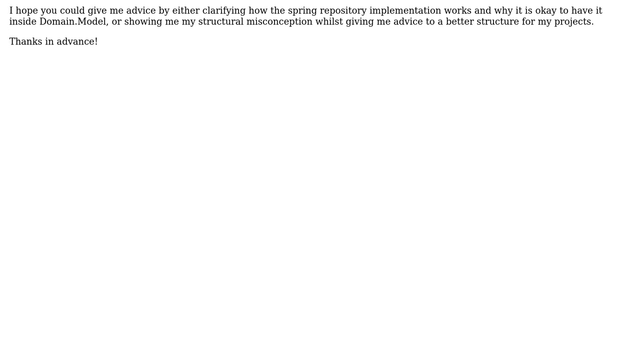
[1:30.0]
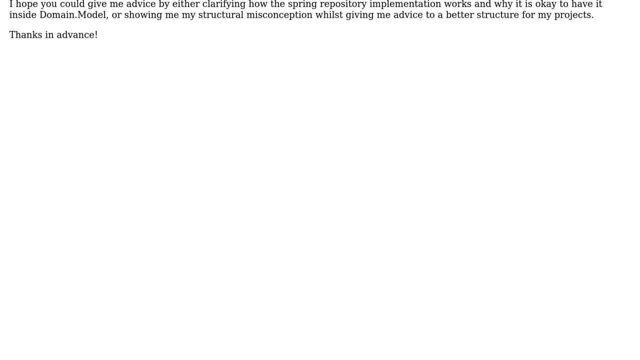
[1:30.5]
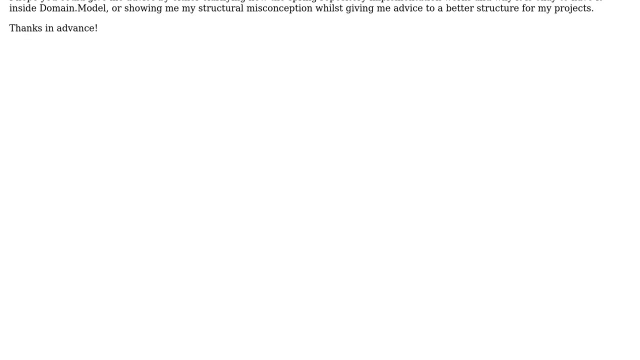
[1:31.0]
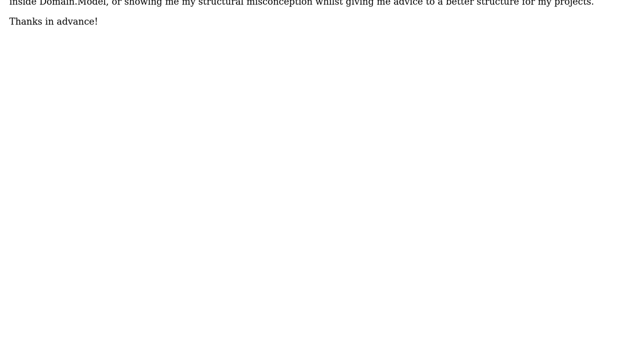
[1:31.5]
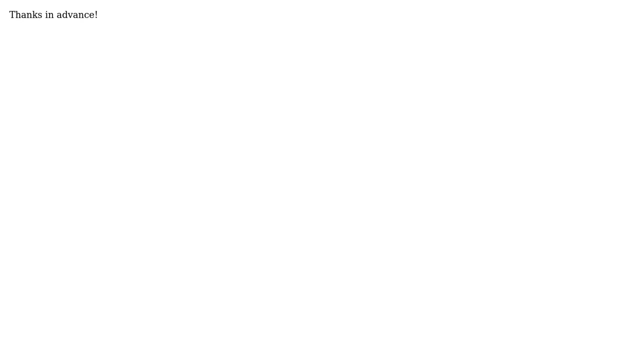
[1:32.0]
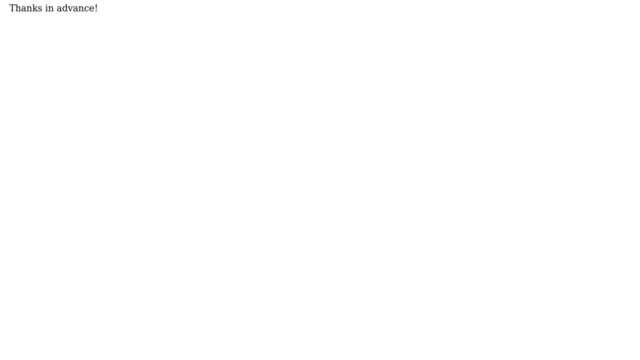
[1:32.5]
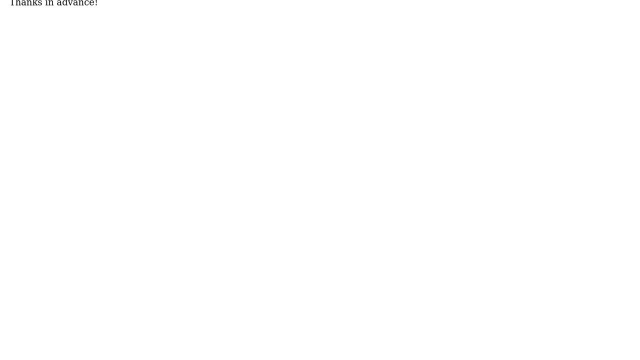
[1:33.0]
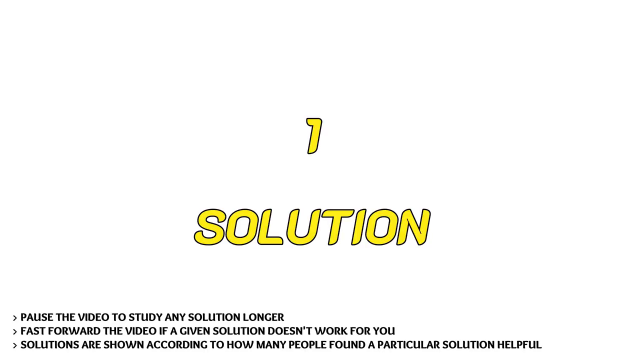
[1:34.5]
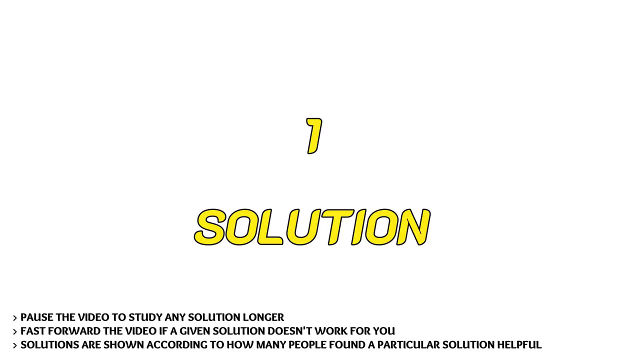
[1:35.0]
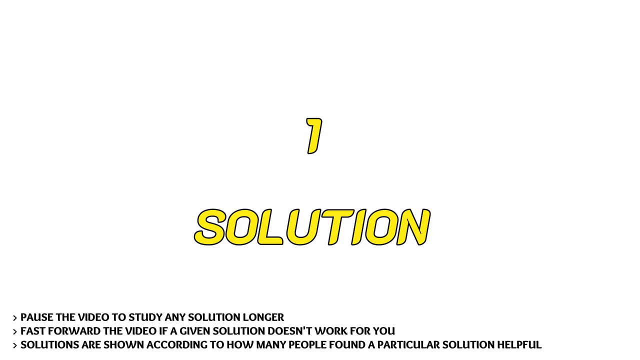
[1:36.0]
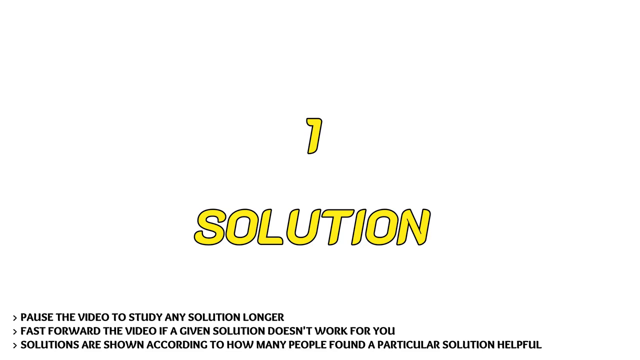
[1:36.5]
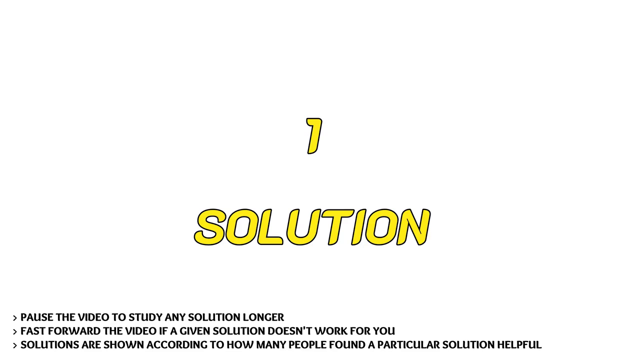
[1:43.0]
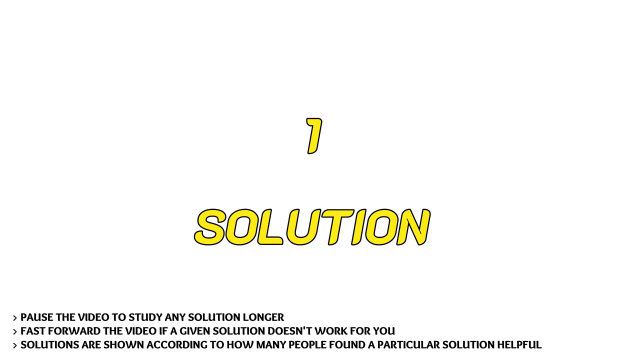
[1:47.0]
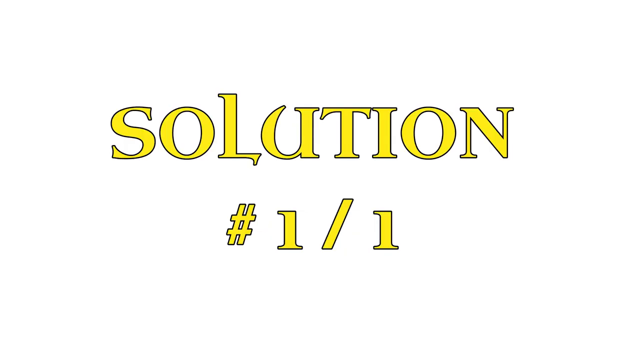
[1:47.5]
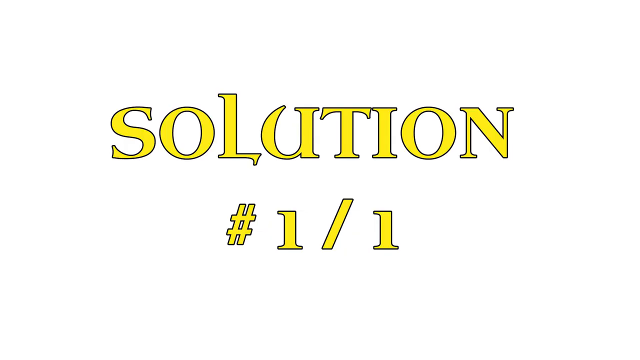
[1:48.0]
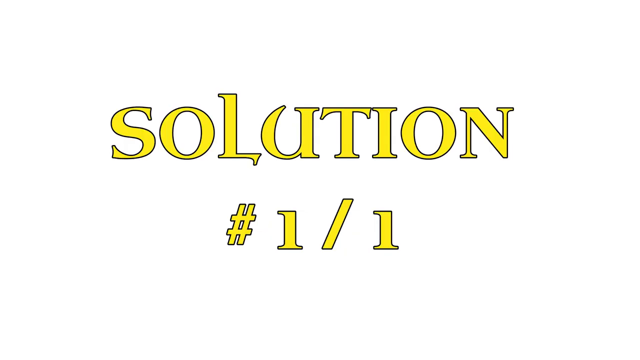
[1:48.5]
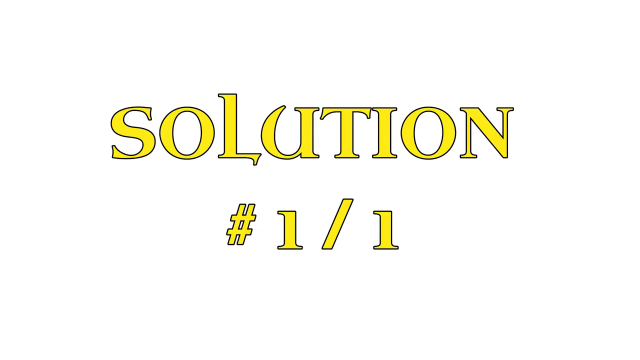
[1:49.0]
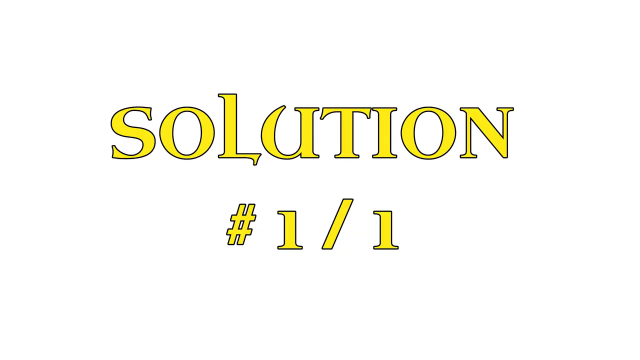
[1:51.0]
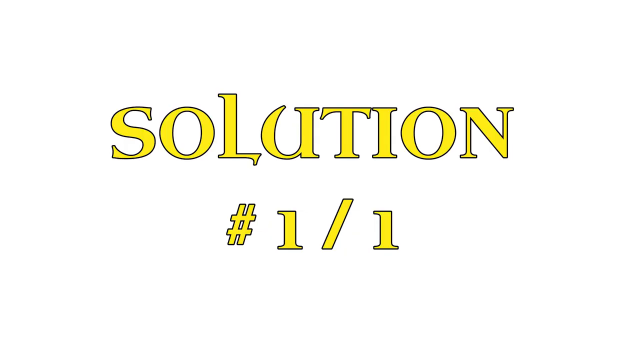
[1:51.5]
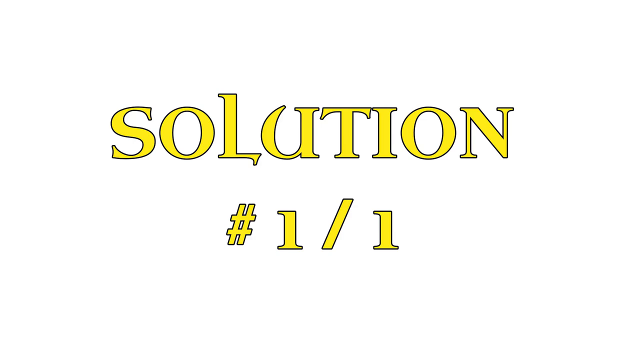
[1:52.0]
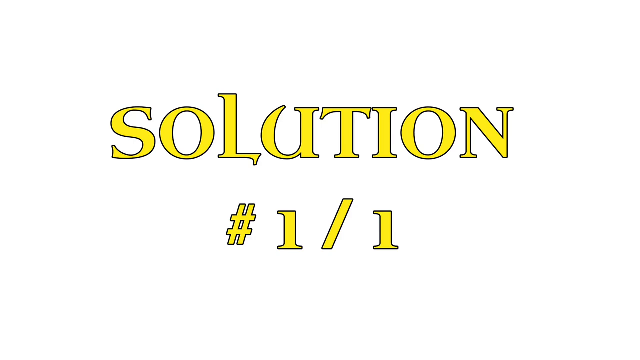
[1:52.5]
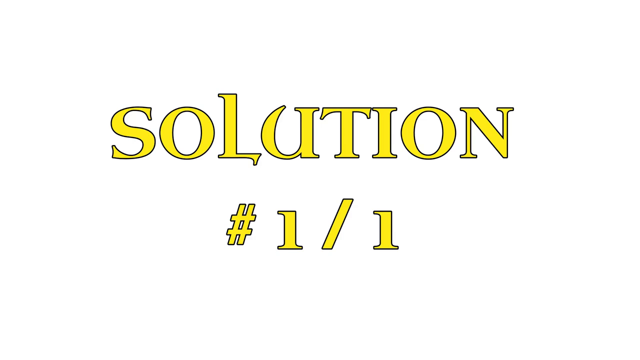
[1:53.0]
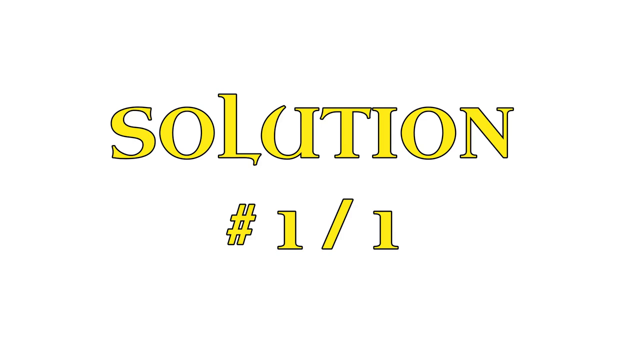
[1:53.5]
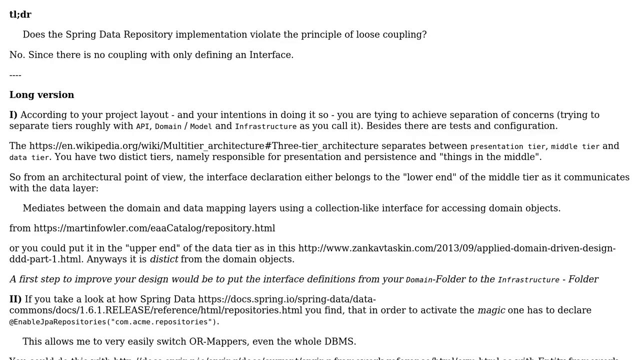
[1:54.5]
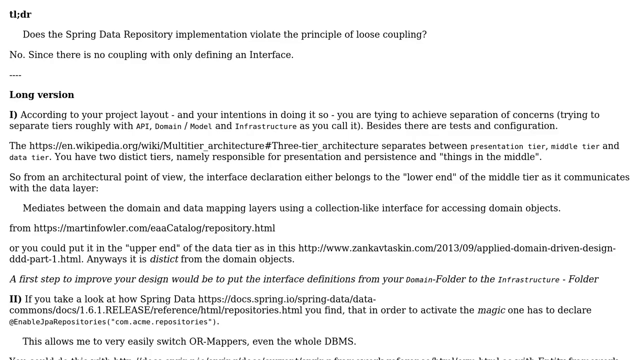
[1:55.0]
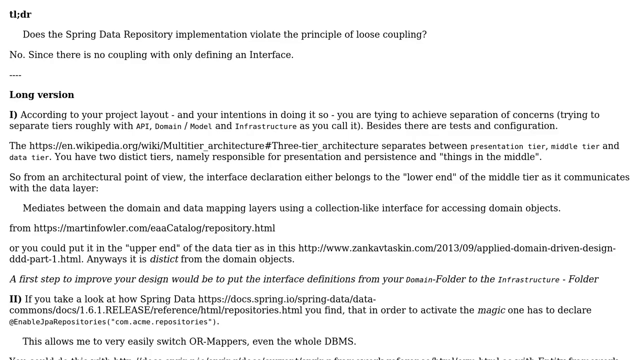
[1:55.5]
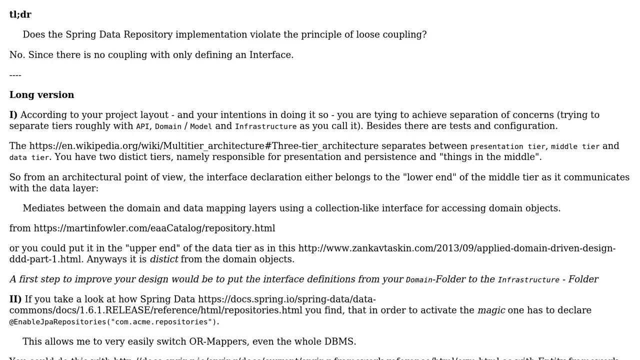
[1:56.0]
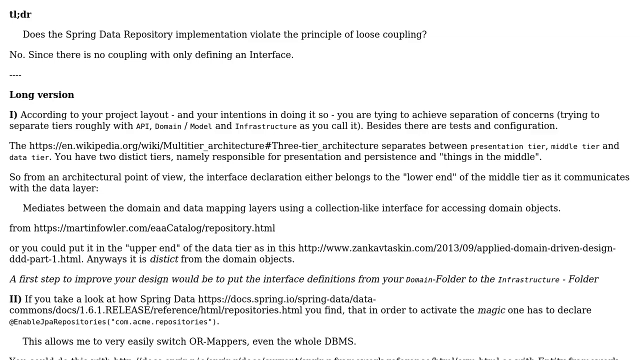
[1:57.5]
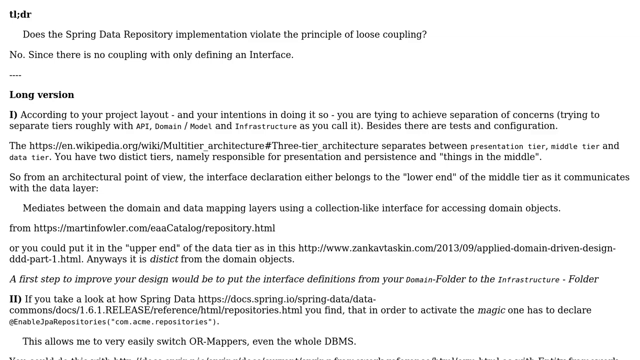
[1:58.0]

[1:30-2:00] The page scrolls all the way up until the text scrolls completely off the top, and another part of the video appears. Bright yellow text reads "1" and "solution" in all capitals. Below, in bold black capital letters with an arrow character beside them, three lines read "pause the video to study any solution longer", "fast forward the video if a given solution doesn't work for you", and "solutions are shown according to how many people found a particular solution helpful". Next comes large yellow text reading "solution" with "1/1" below it, followed by a lot of text. It begins "TLDR" and "Does the Spring Data Repository implementation violate the principle of loose coupling? No, since there's no coupling with only defining an interface". Beneath that, in bold, is "long version", then a point 1 beginning "According to your project layout and your intentions in doing so, you're trying to achieve separation of concerns", with much more text below.